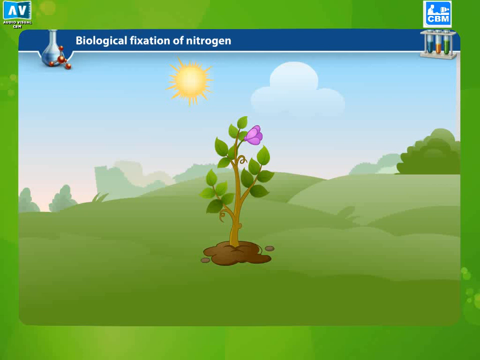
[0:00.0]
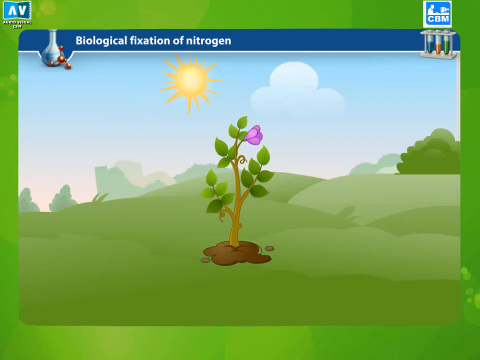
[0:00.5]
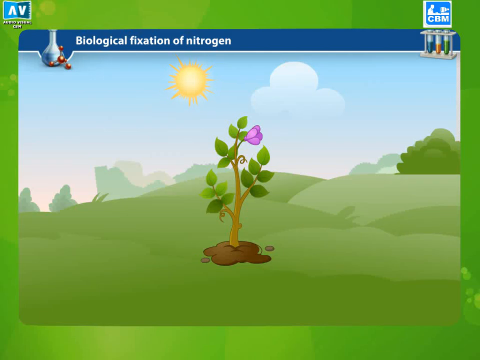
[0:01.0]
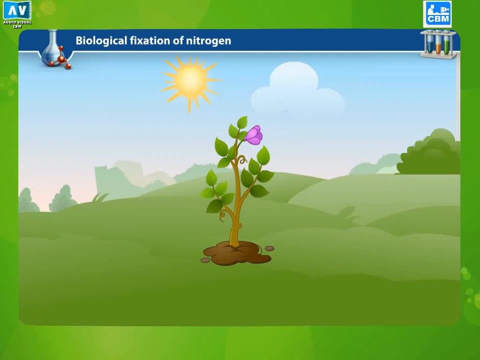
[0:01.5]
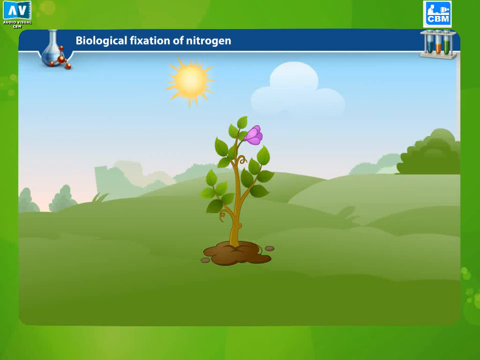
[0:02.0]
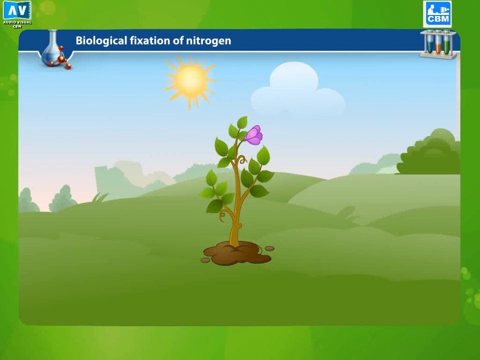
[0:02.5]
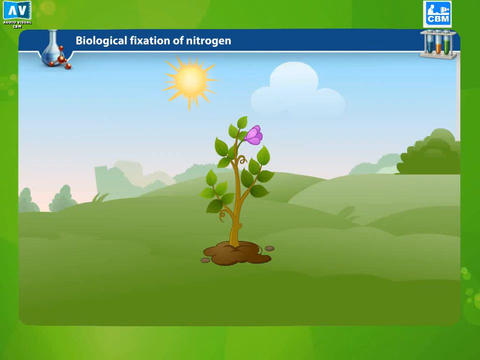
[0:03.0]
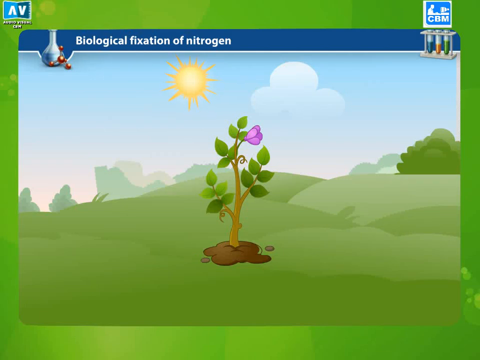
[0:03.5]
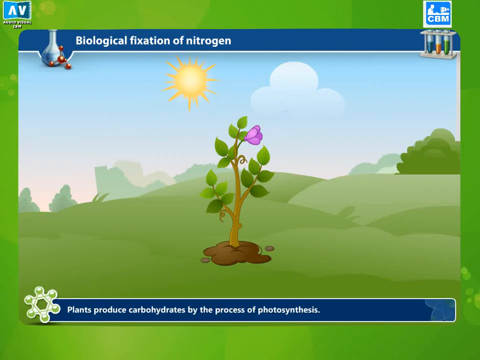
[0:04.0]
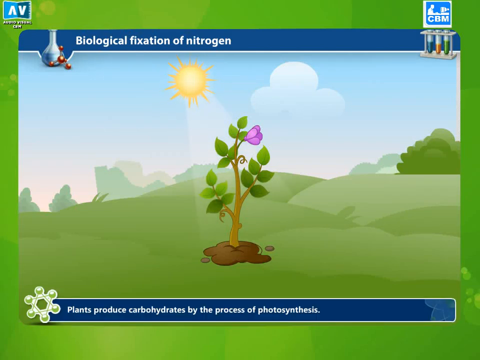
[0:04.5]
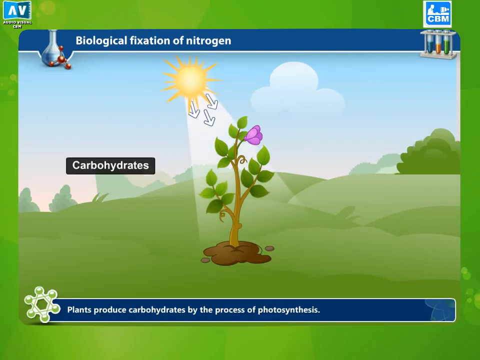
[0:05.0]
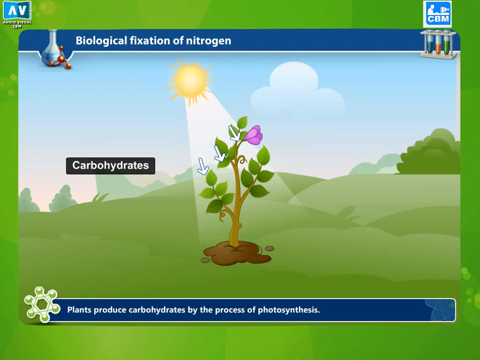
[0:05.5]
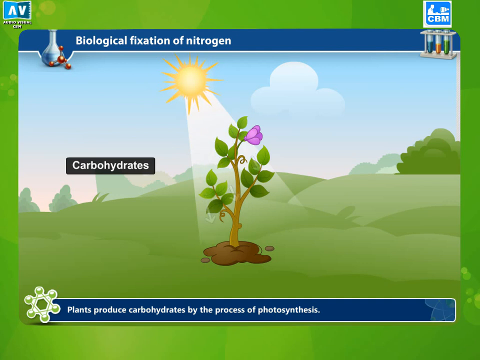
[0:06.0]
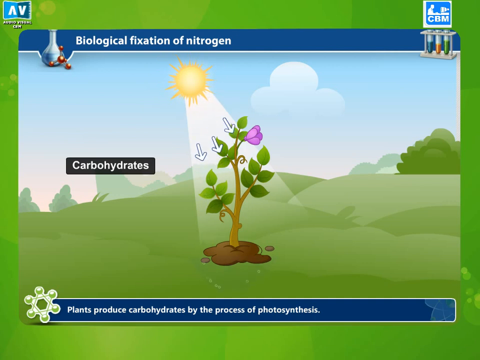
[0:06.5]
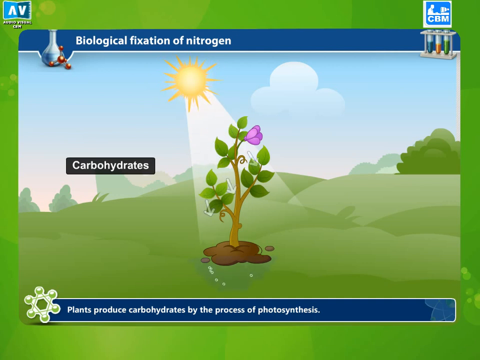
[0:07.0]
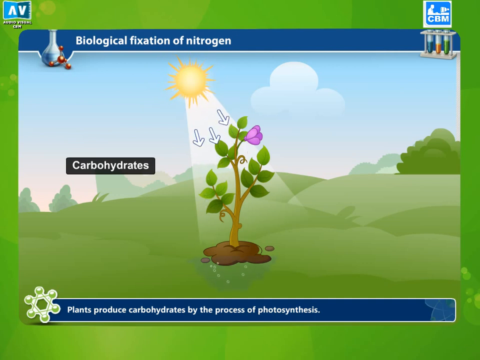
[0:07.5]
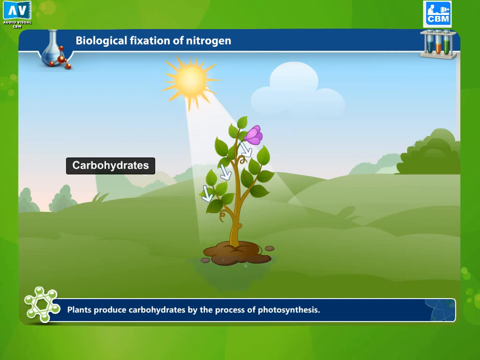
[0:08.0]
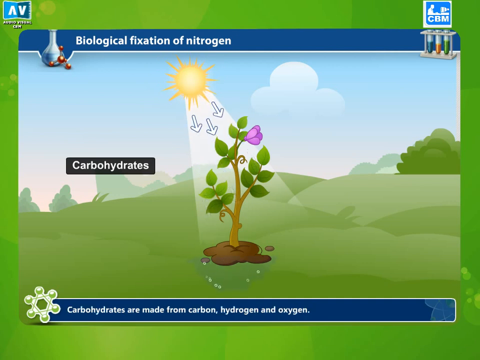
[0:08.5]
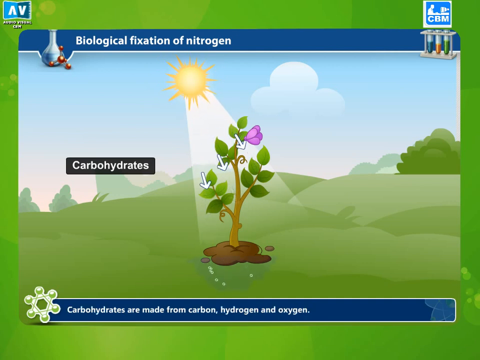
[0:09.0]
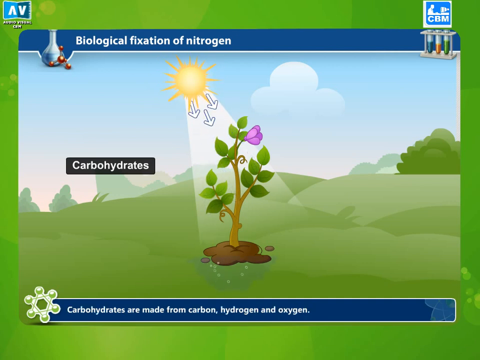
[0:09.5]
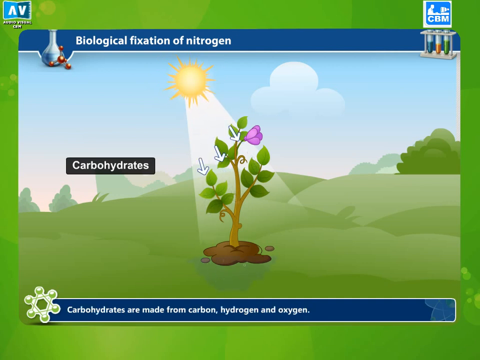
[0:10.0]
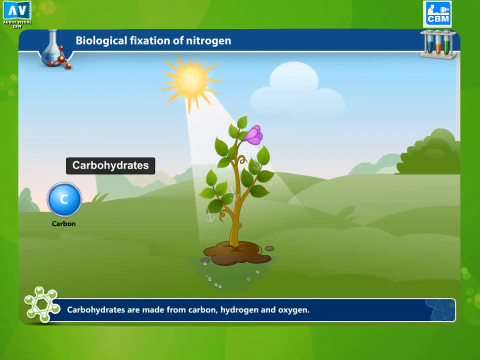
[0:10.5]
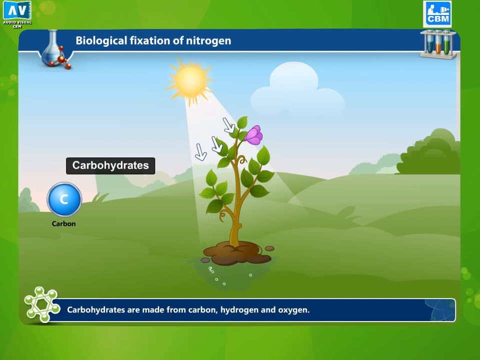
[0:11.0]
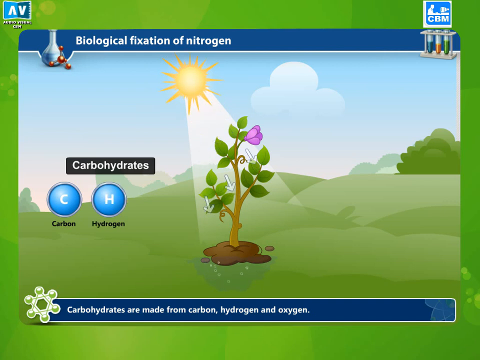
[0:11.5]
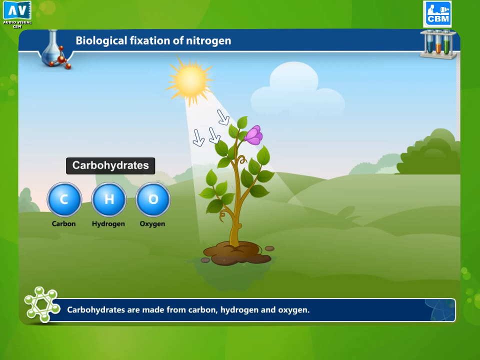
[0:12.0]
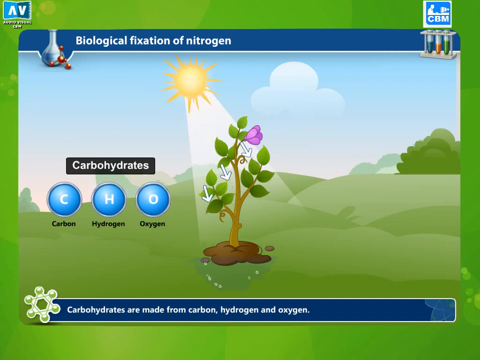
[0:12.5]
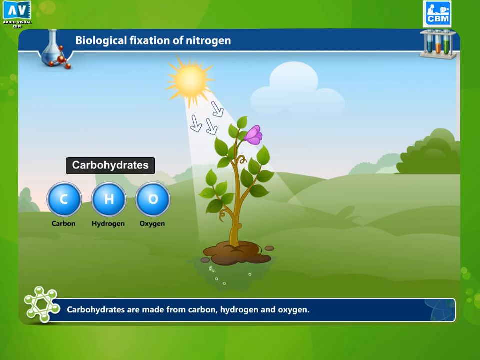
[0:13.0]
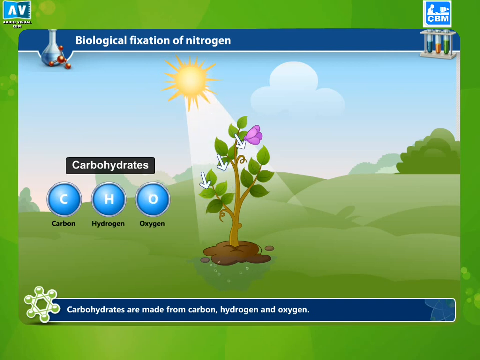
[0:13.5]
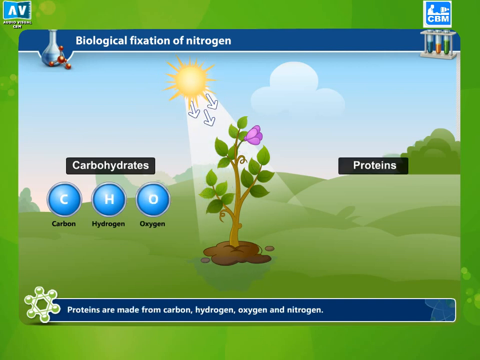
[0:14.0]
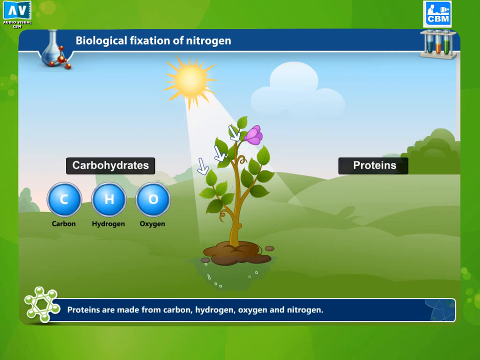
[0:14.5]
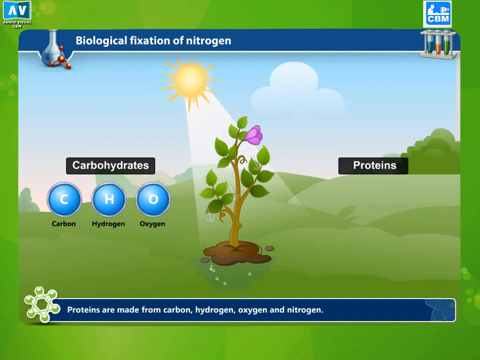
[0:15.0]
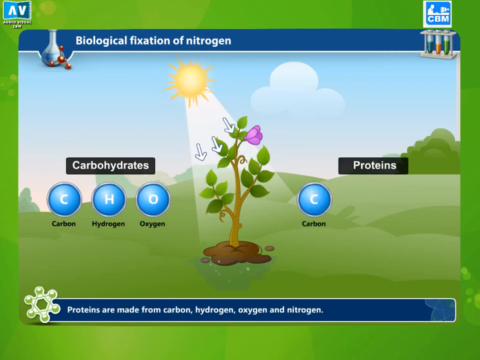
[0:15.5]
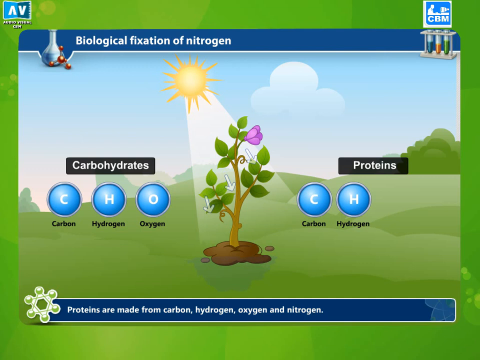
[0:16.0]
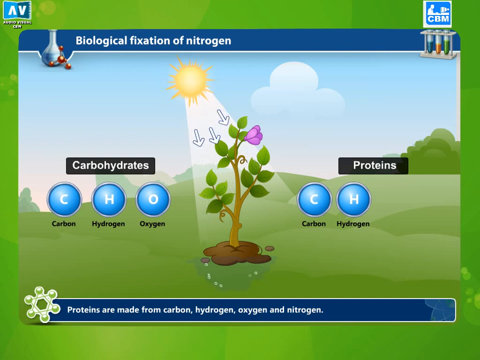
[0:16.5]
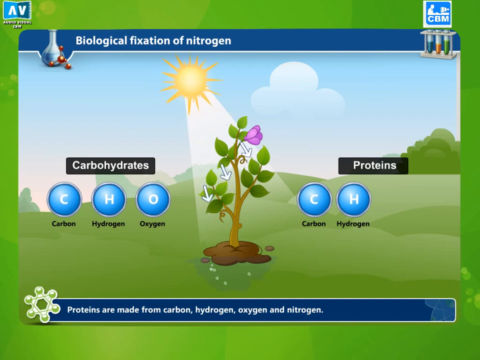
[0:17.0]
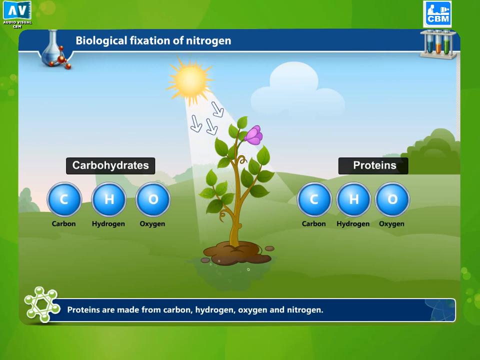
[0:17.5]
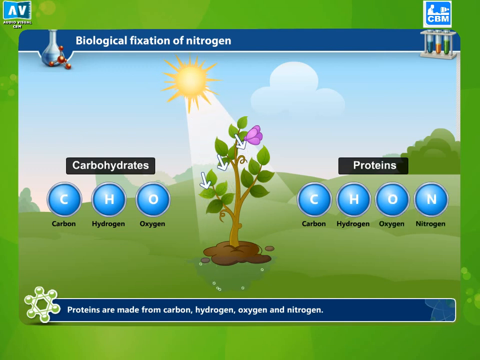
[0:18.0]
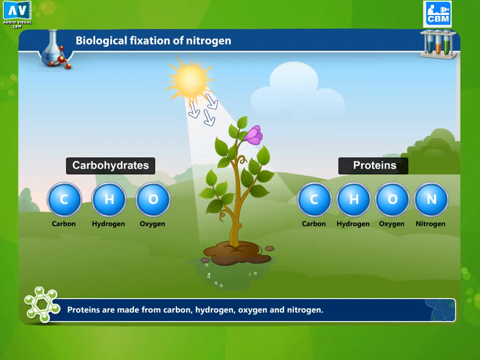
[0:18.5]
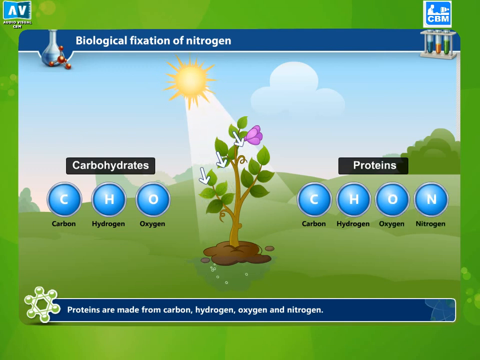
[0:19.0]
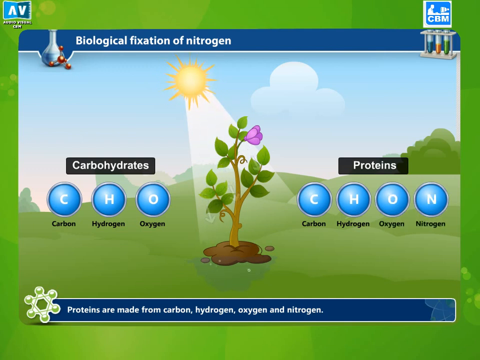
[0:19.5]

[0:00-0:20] A cartoon illustration shows a green rolling hill. A tree that looks freshly planted stands in some disturbed brown dirt, and the tree or plant has a purple flower on top of it. A yellow sun is in the background, almost directly behind the flower or plant, and some trees are in the background. At the top, white text reads "biological fixation of nitrogen." At the top right is a vial holder with forest green, orange, and regular green fluid in the vials. At the bottom of the screen, white text reads "plants produce carbohydrates by the process of photosynthesis." The word "carbohydrates" then appears to the left of the plant, with symbols for carbon, hydrogen, and oxygen underneath. To the right of the plant, white text reads "proteins," with carbon and hydrogen underneath; oxygen and nitrogen appear after that.